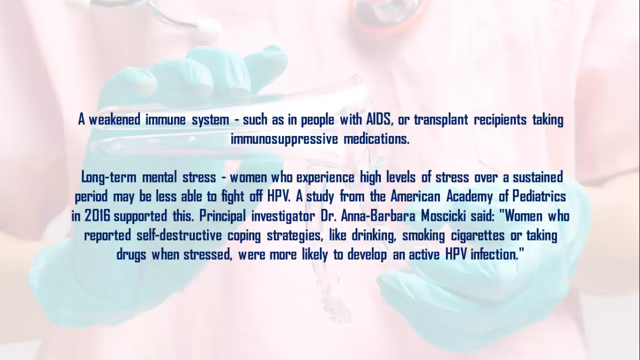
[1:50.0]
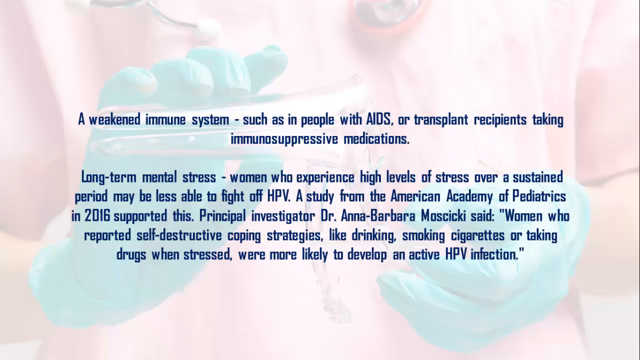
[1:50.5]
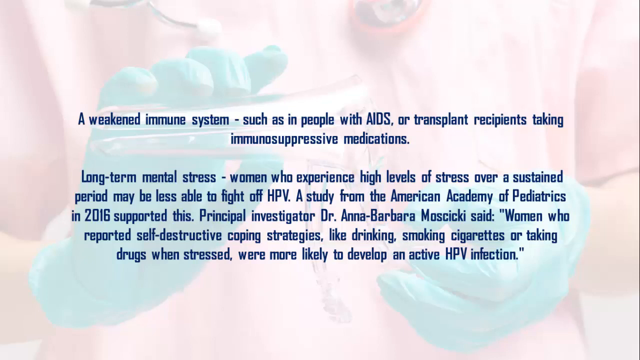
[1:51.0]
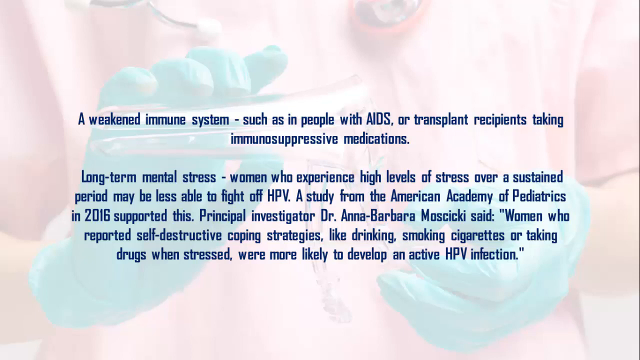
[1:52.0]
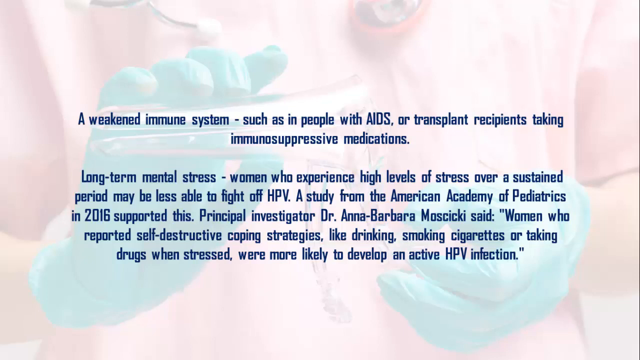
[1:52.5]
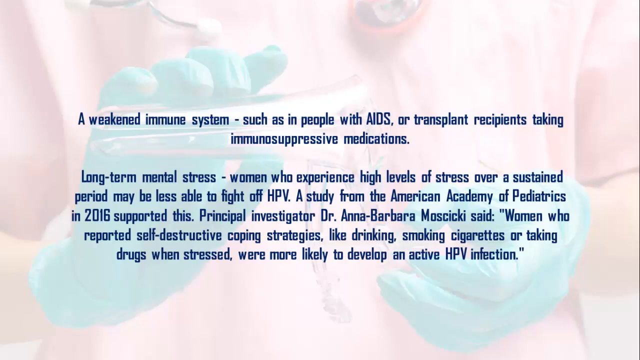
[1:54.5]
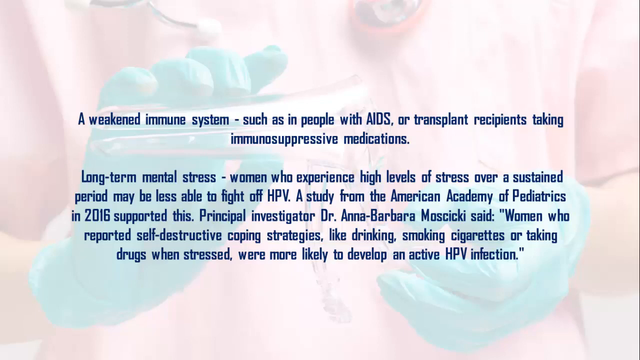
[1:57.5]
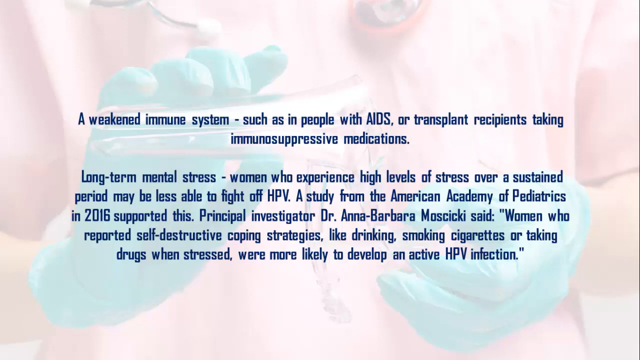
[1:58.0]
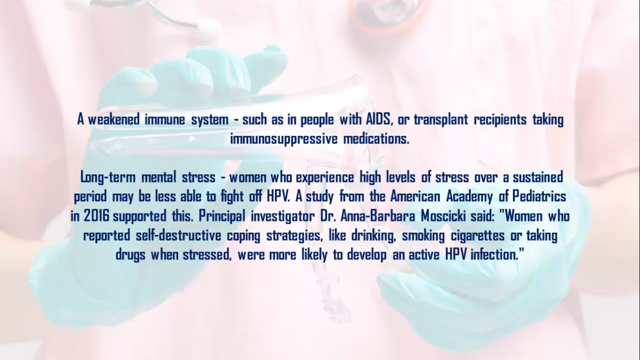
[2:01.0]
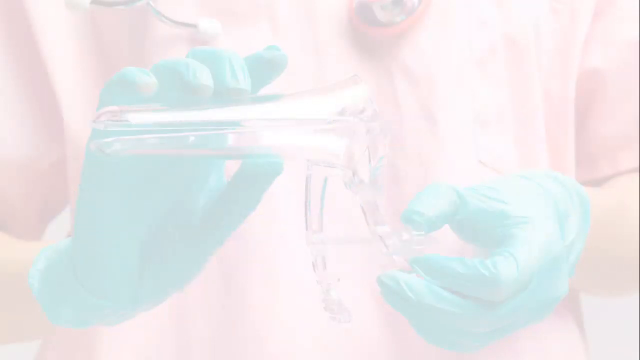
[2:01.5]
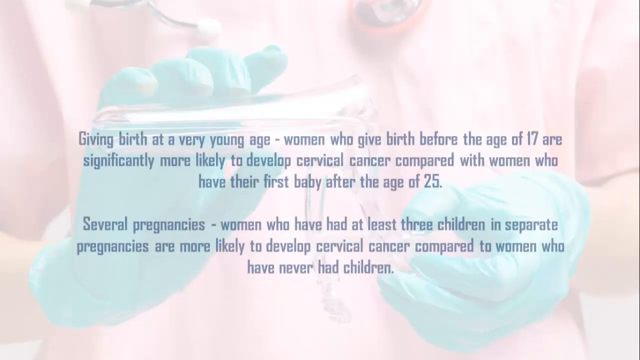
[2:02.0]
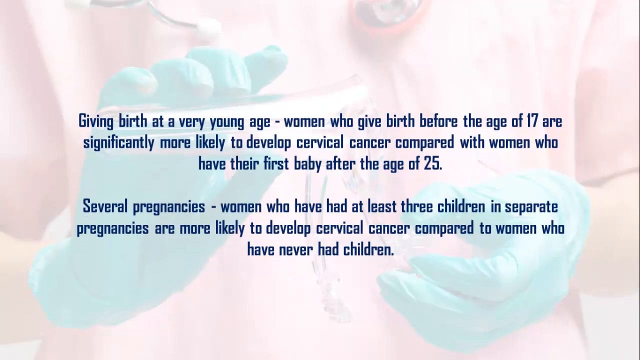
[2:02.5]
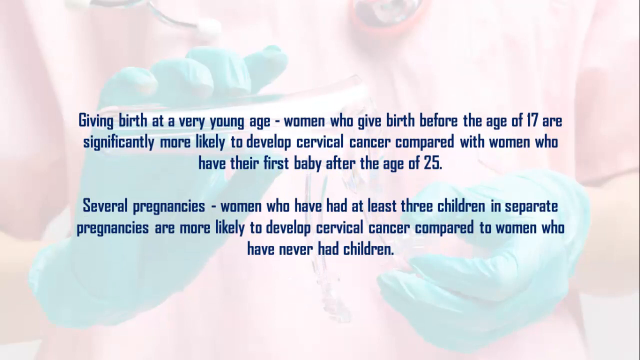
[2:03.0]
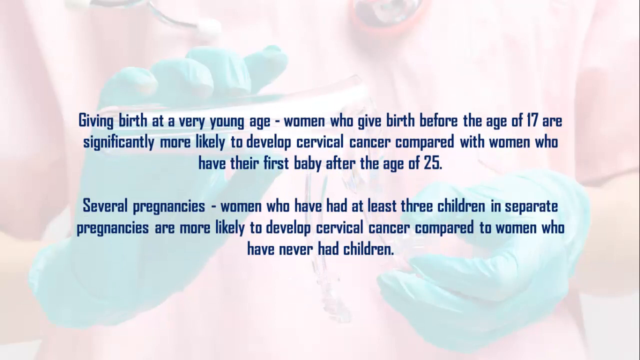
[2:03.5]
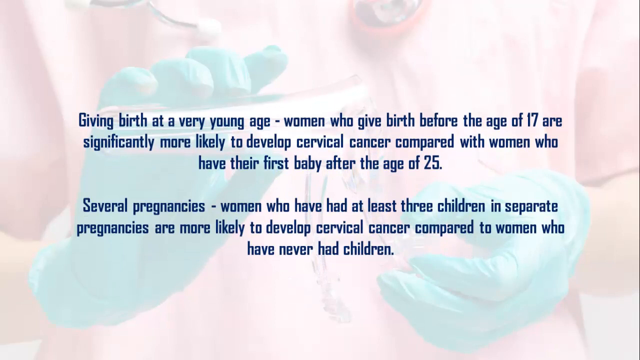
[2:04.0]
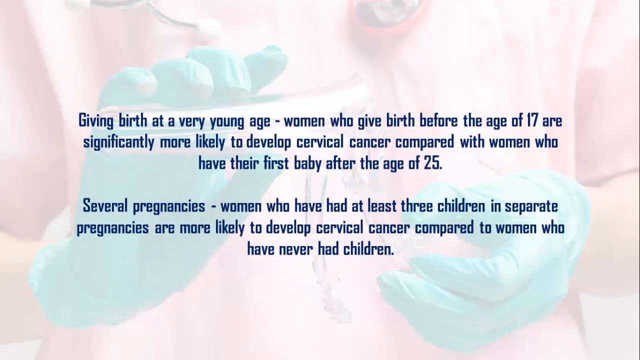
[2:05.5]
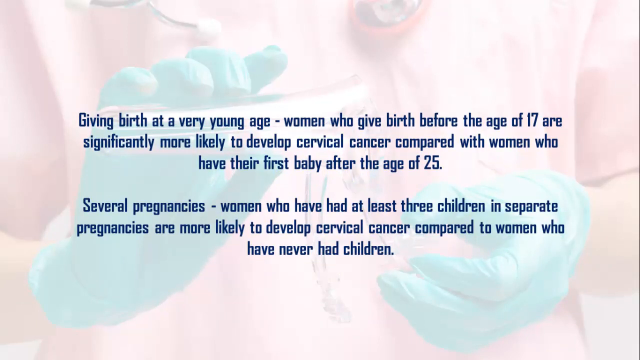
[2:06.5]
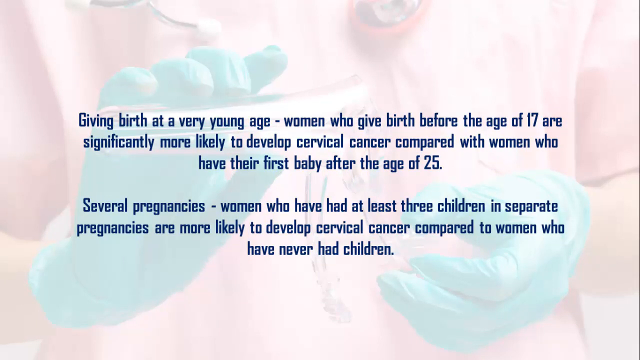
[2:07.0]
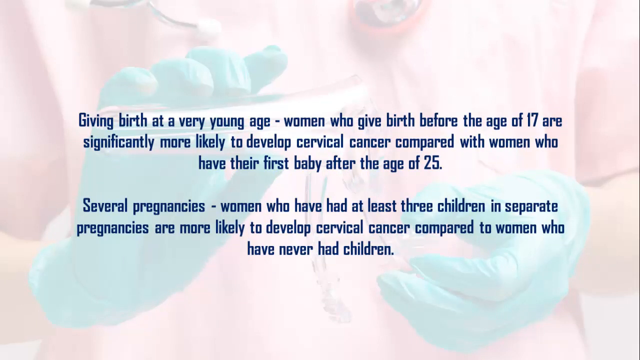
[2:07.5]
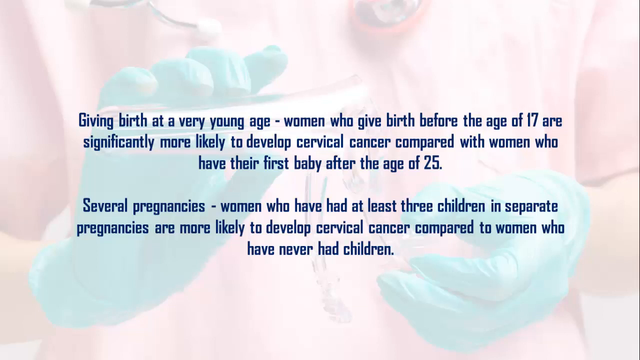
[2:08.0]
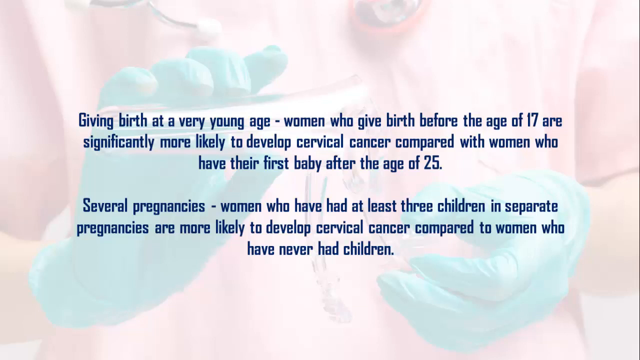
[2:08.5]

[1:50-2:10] The grayed-out dark background still shows apparently a doctor in a shirt with a pink hue. A stethoscope is around their neck, with the ear pieces and the metal circular part visible. Their gloved hands are in front of their chest, and it looks like they are pouring liquid from one tube into another tube. Dark blue text, in two paragraphs in the center of the screen, says: "A weakened immune system such as in people with AIDS or transplant recipients taking immunosuppressive medications. Long-term mental stress, women who experience high levels of stress over a sustained period may be less able to fight off HPV. A study from the American Academy of Pediatrics in 2016 supported this," followed by a named principal investigator who "said women who reported self-destructive coping strategies like drinking, smoking cigarettes, or taking drugs when stressed were more likely to develop an active HPV infection."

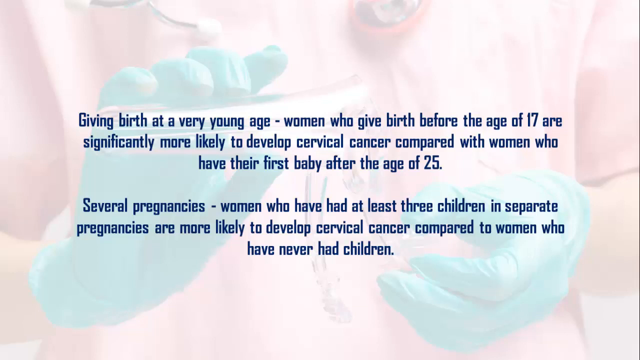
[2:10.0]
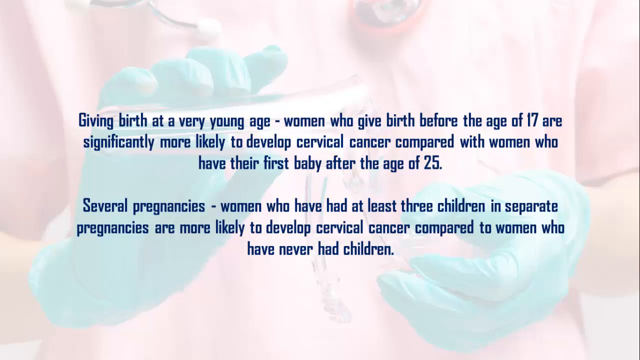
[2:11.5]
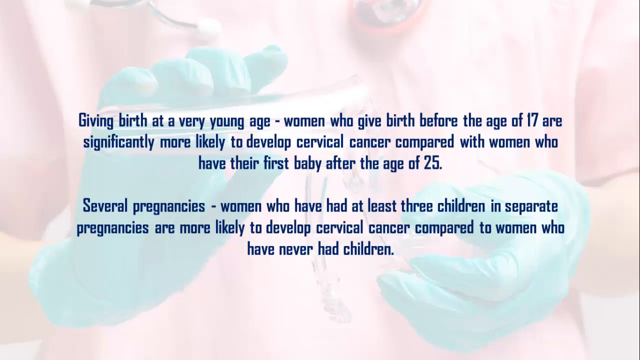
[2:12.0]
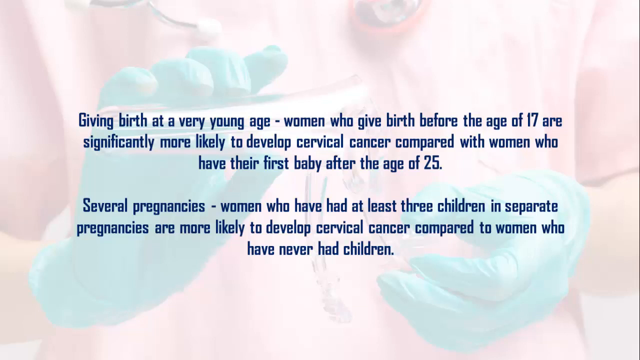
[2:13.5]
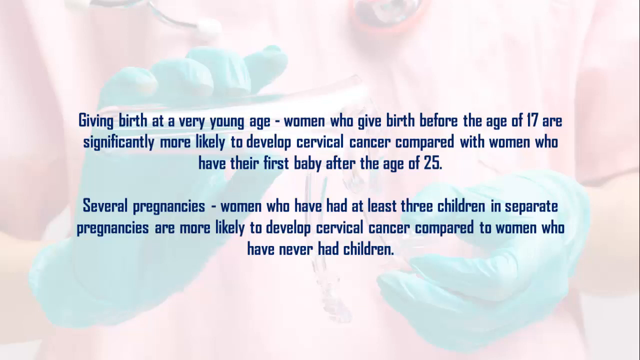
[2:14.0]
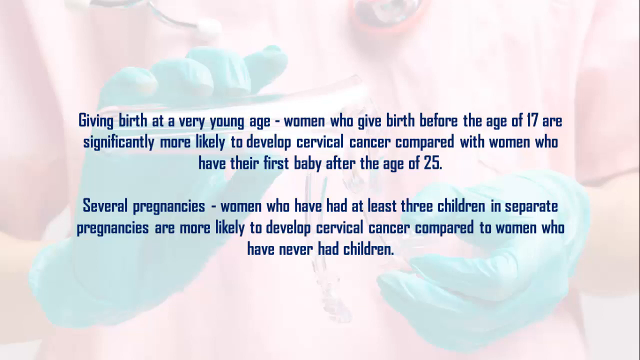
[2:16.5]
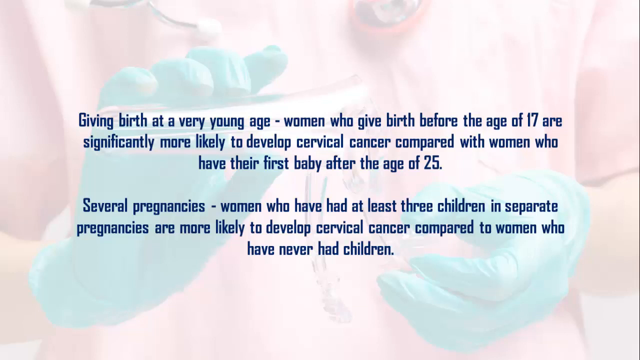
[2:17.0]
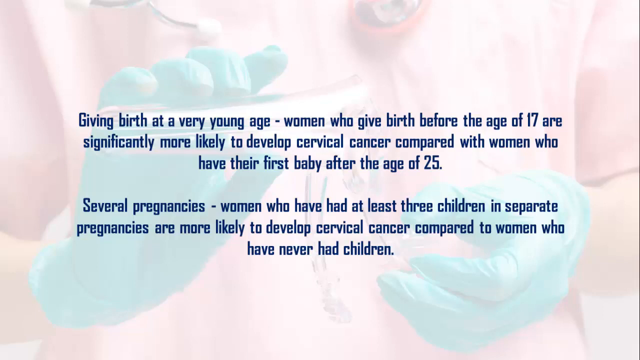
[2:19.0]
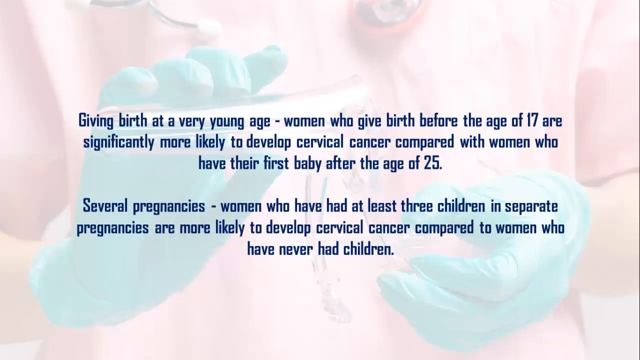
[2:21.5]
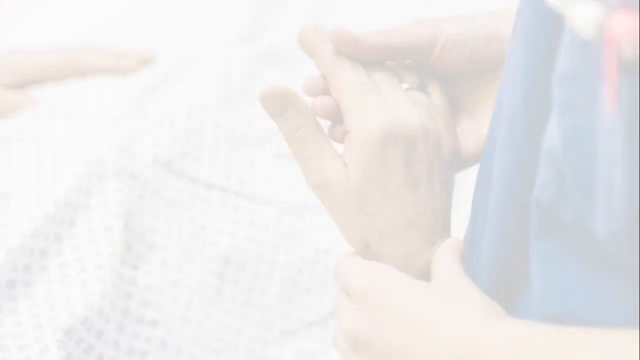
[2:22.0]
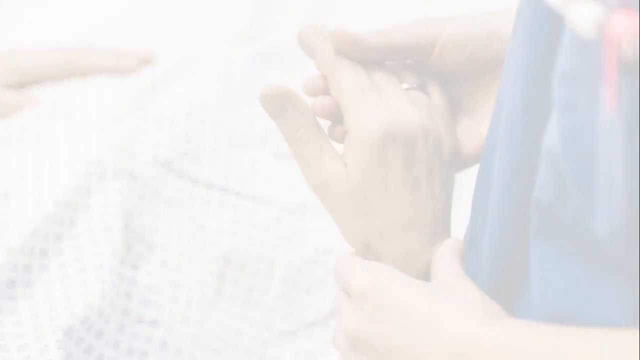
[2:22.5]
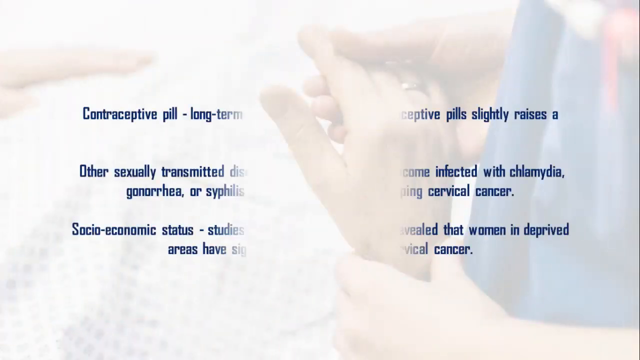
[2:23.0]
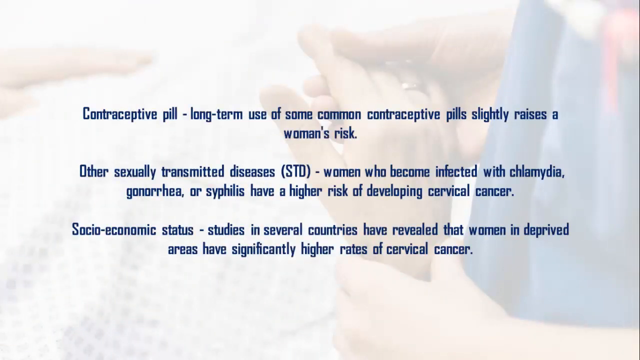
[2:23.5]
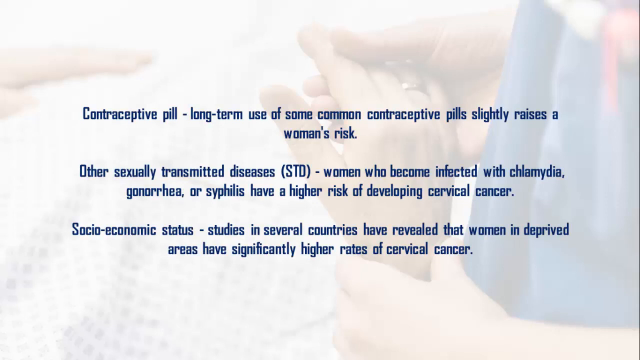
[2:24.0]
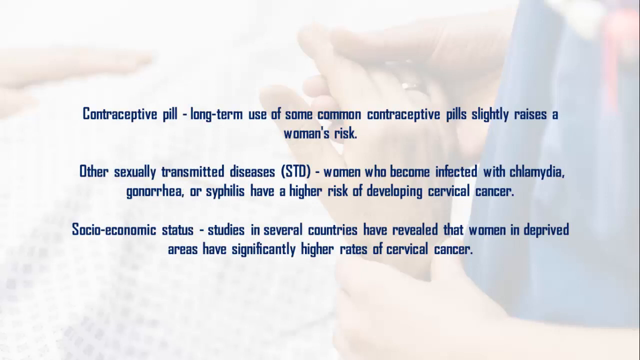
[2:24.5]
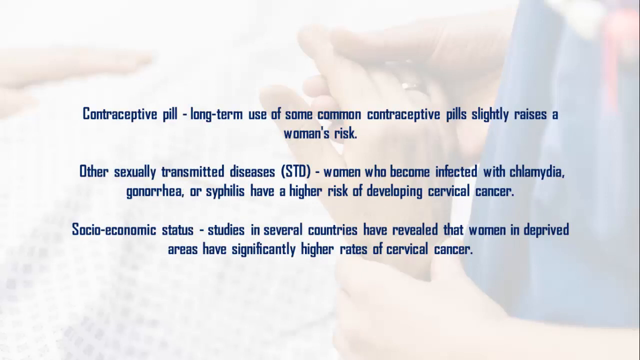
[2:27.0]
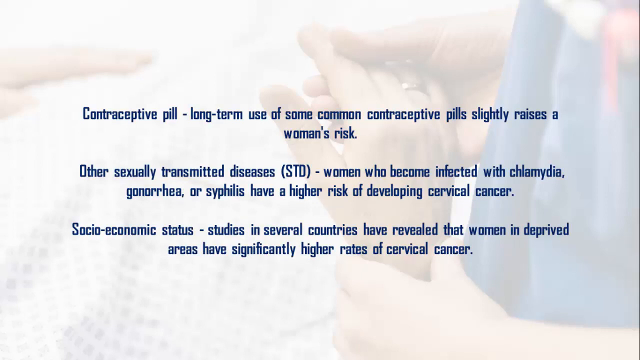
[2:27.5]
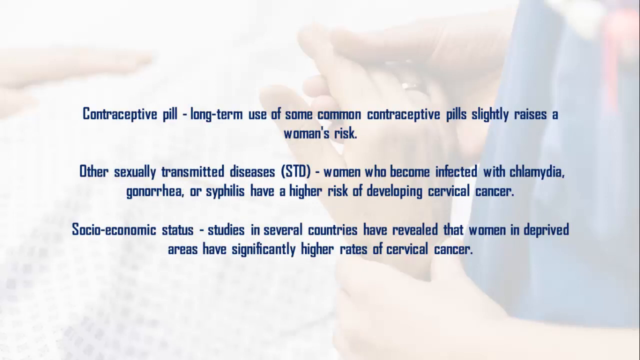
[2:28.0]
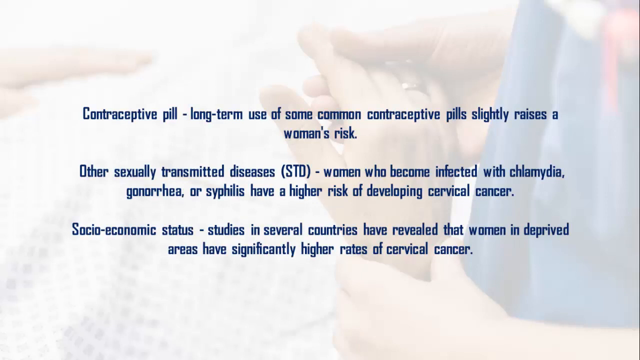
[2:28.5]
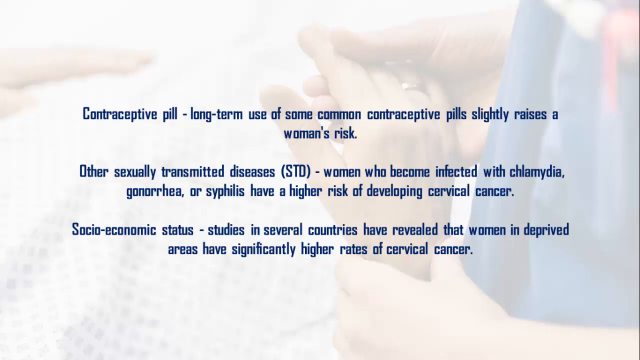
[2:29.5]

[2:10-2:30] The background still shows the doctor's chest with a stethoscope around their neck; they wear gloves and pour one tube into another. In the very center, dark blue text in two paragraphs says: "Giving birth at a very young age, women who give birth before the age of 17 are significantly more likely to develop cervical cancer compared with women who have their baby after the age of 25. Several pregnancies. Women who have had at least three children in separate pregnancies are more likely to develop cervical cancer compared to women who have never had children." The 25 and 17 are written as numerals. That text goes away and is replaced by: "Contraceptive pill long-term use of some common contraceptive pills slightly raises a woman's risk. Other sexually transmitted diseases, STD, women who become infected with chlamydia, gonorrhea, or syphilis have a higher risk of developing cervical cancer. Socioeconomic status, in several countries have revealed that women in deprived areas have significantly higher rates of cervical cancer."